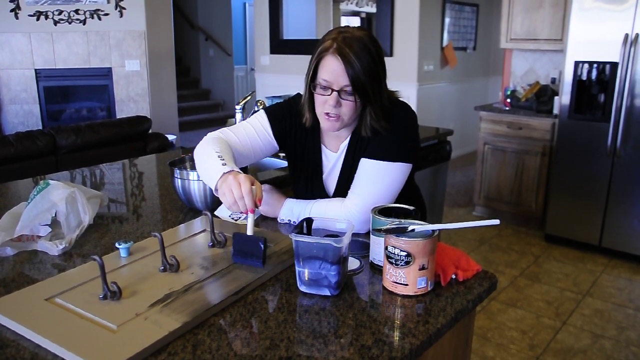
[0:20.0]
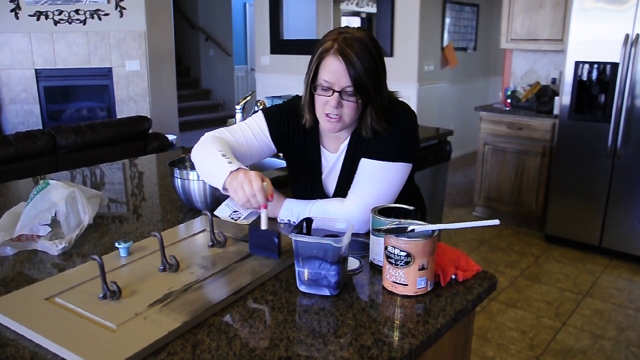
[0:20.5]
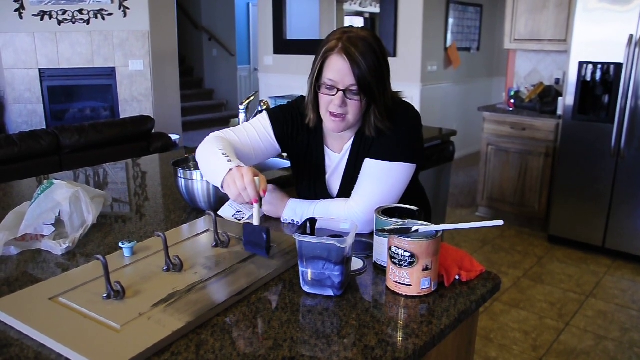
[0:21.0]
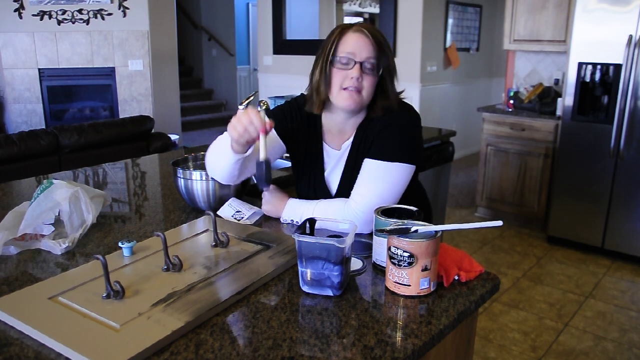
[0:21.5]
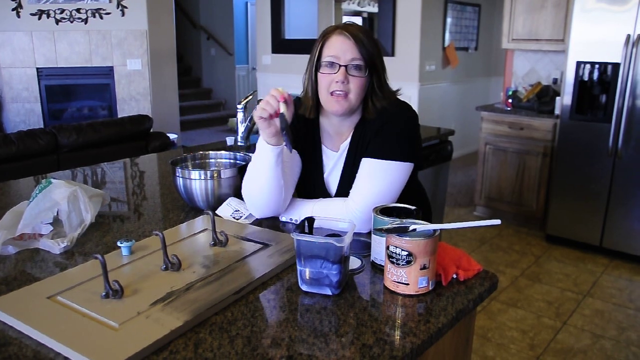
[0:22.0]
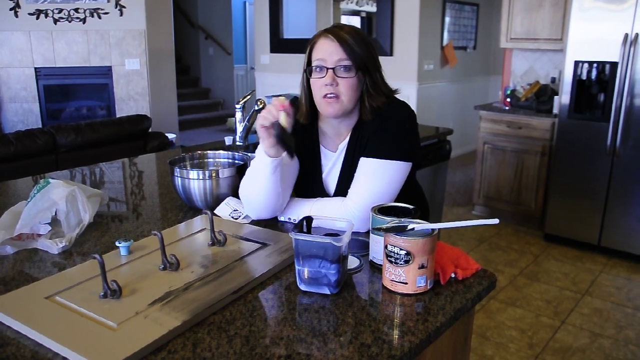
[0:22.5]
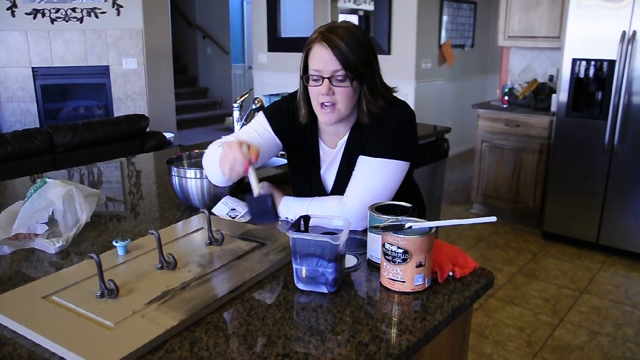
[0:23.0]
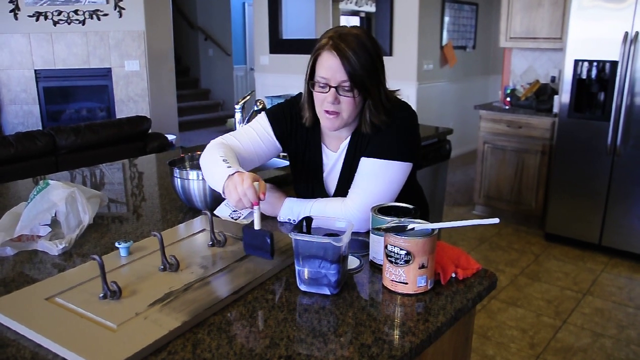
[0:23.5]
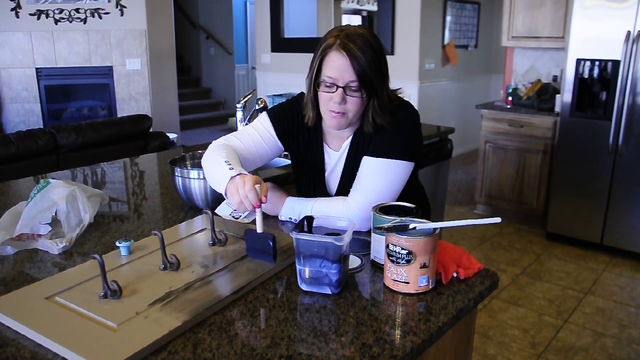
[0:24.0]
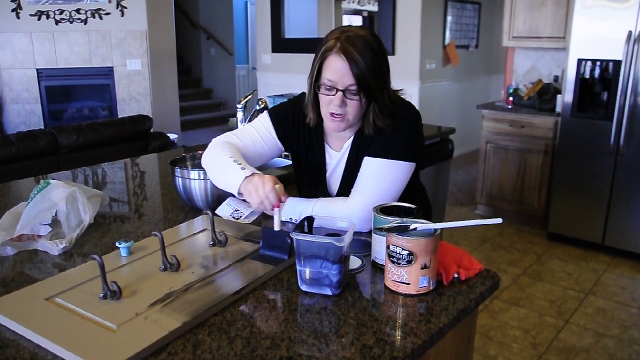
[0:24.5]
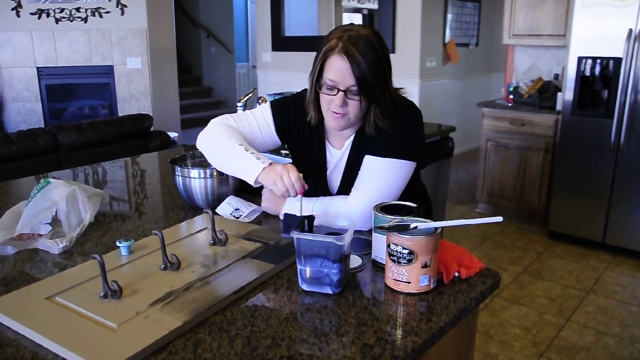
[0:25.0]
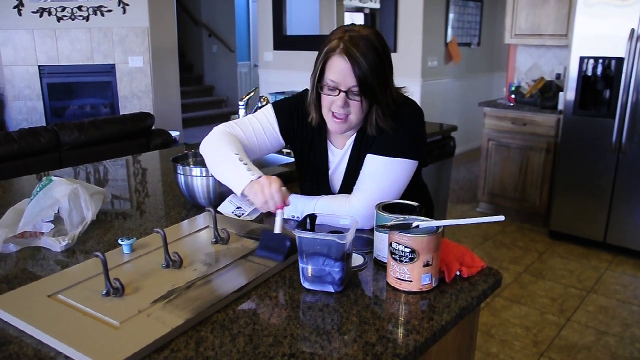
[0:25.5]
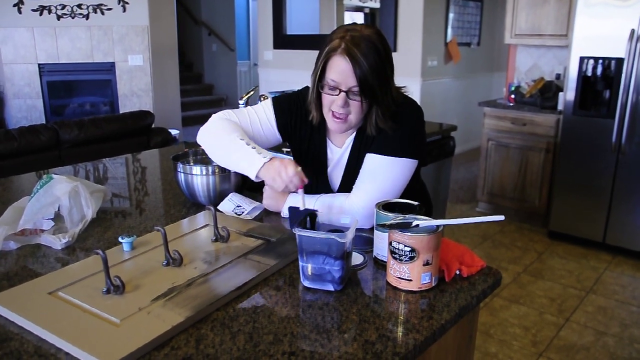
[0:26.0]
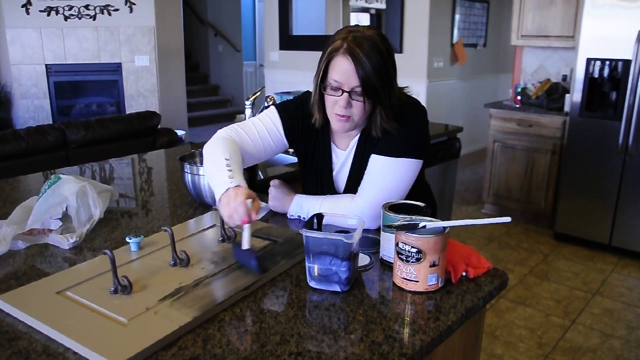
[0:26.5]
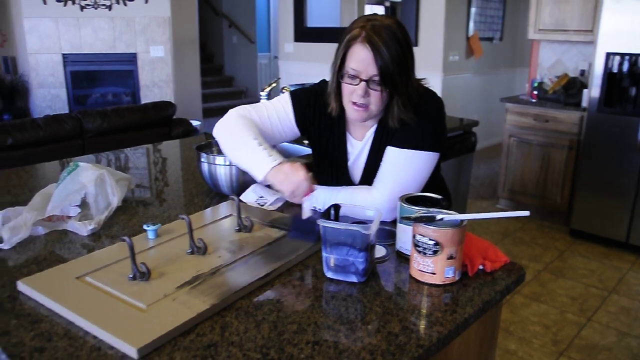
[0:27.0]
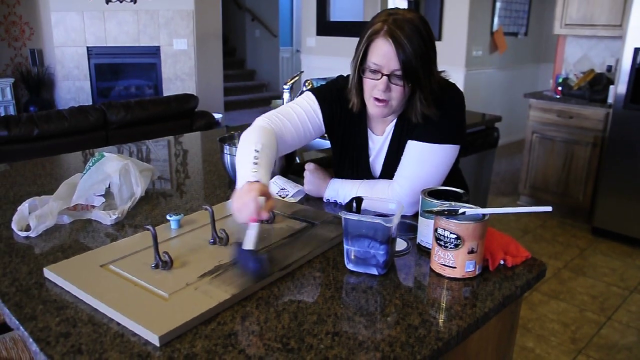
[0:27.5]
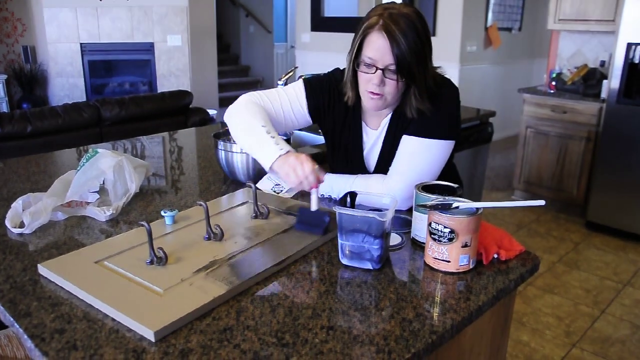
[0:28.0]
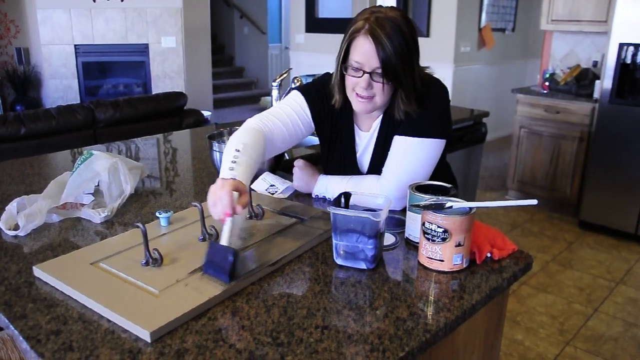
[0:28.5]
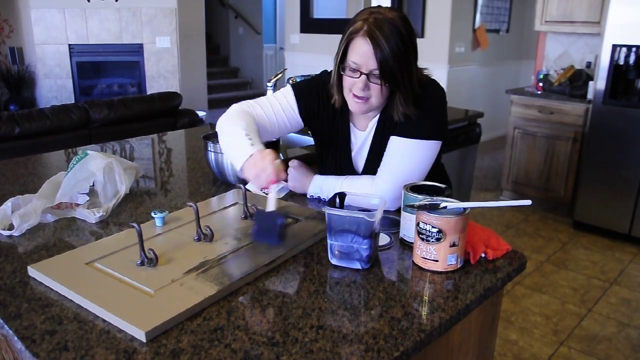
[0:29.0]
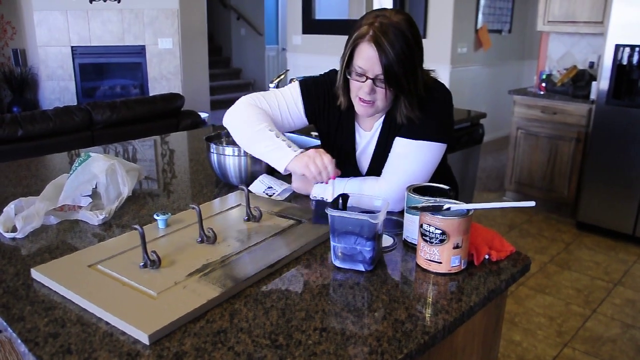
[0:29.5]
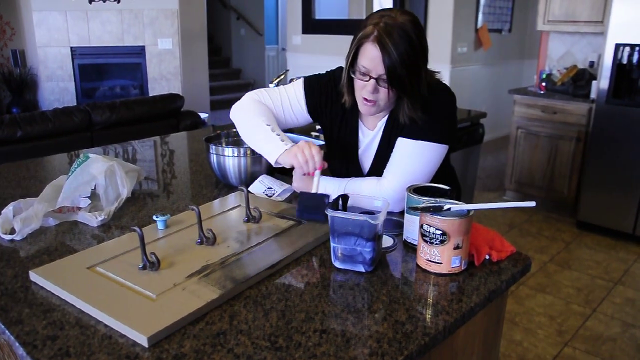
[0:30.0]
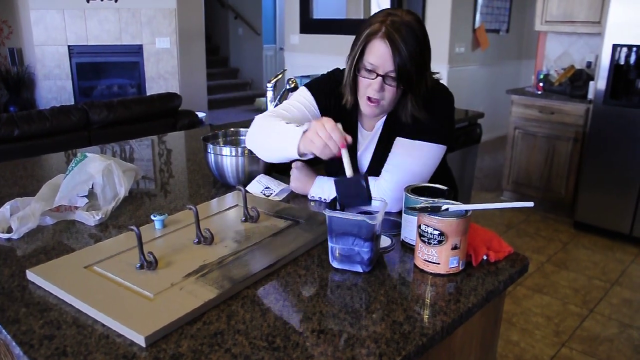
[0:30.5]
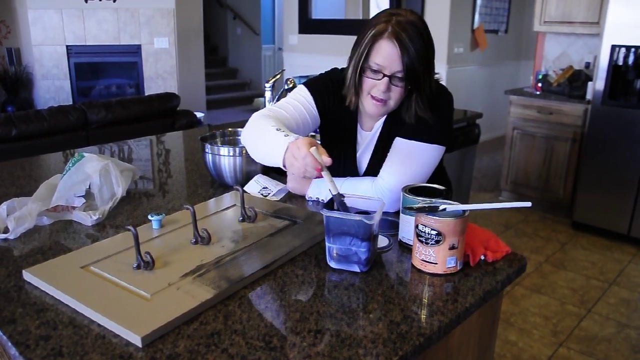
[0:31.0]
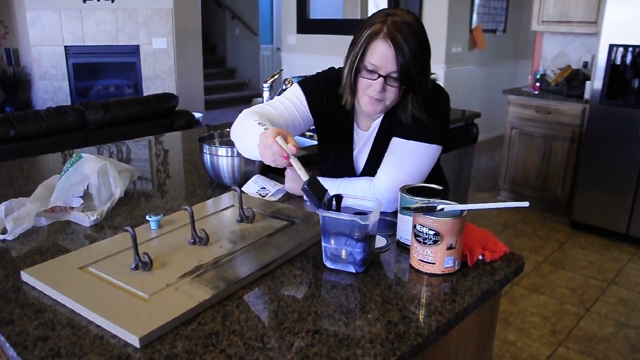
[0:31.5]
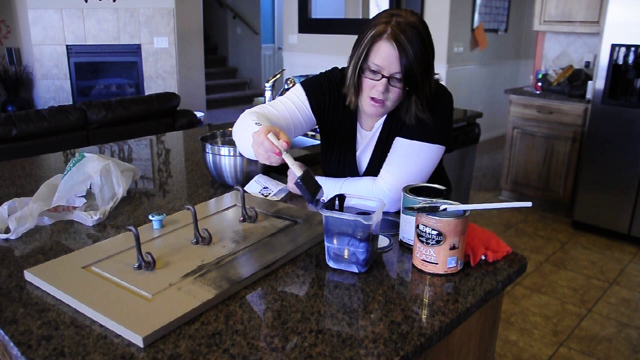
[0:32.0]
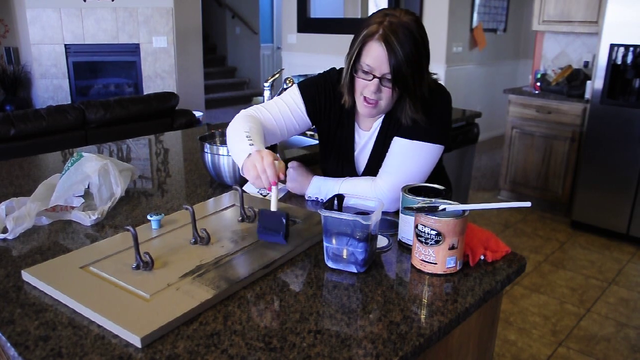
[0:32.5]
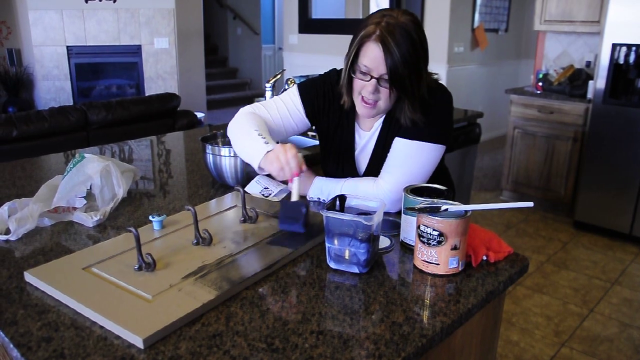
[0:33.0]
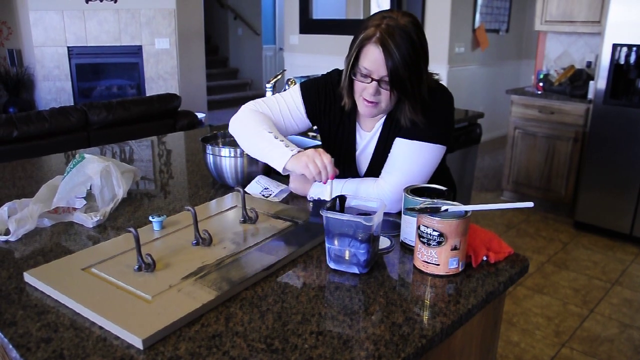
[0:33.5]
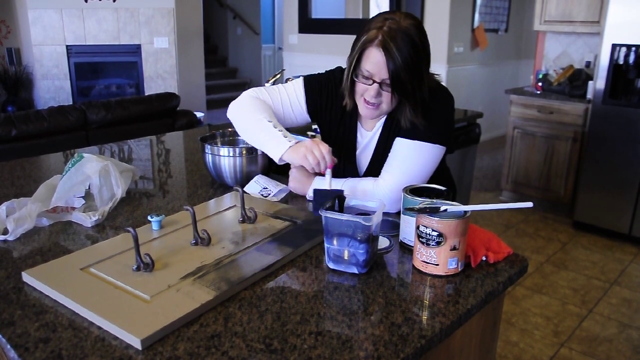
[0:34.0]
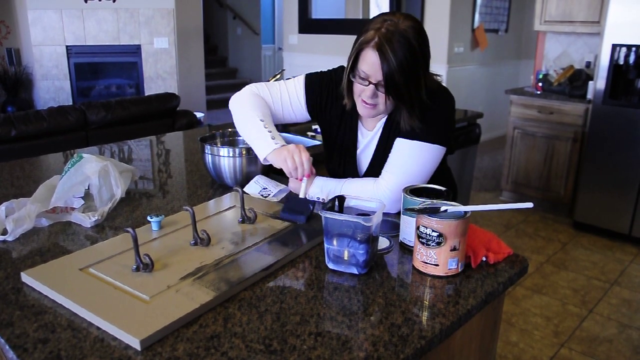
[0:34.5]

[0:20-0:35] The YouTube video is titled How to Glaze Furniture. A woman with dark hair and glasses, wearing a white shirt and black sweater vest, applies paint to a rectangular piece of wood meant for hanging on the wall. It has three hooks in its center part and what looks like a knob at the top from this view. She is leaning against a kitchen counter, on which are two cans of paint or stain and a plastic container with what appears to be some shade of blue paint or oil paint. A red cloth lies in the top right corner of the counter as seen from the camera. Behind her are a counter and a cabinet, and in the background is a side-by-side silver refrigerator, probably stainless steel.